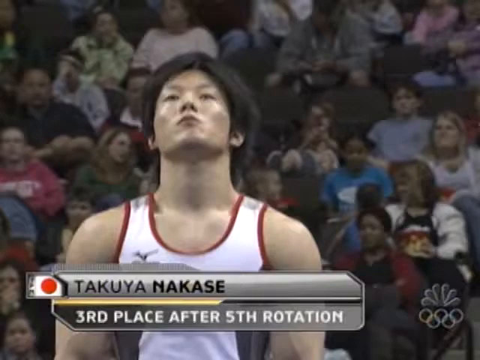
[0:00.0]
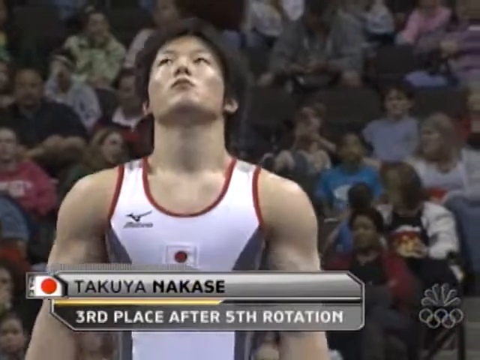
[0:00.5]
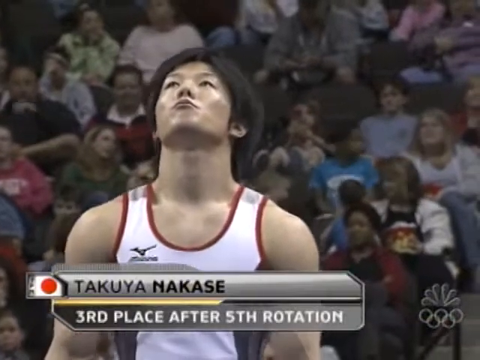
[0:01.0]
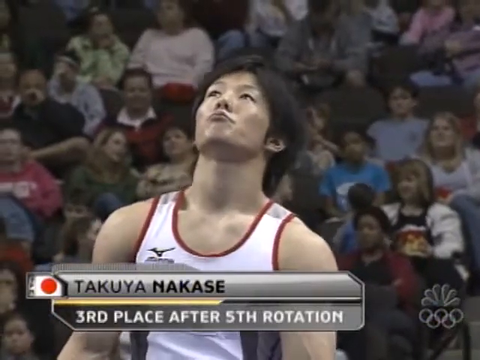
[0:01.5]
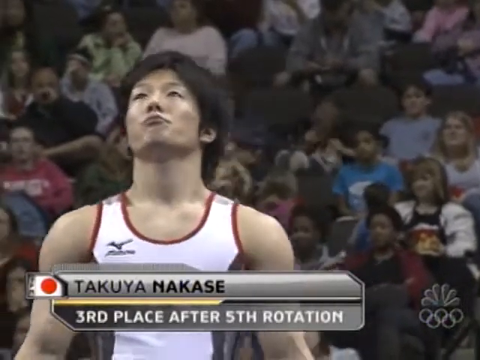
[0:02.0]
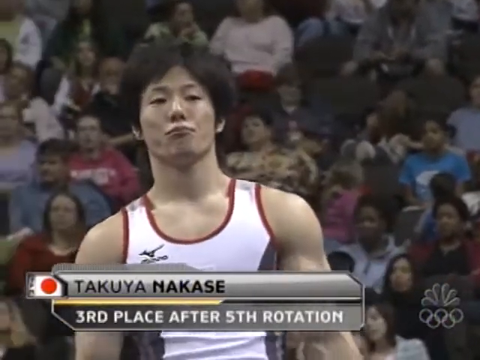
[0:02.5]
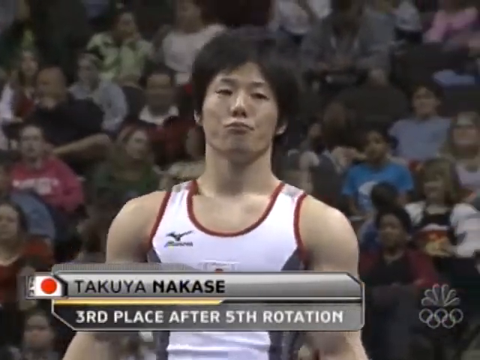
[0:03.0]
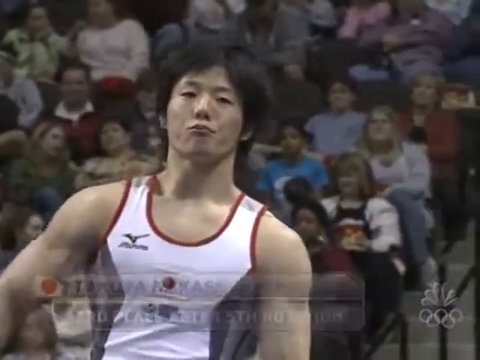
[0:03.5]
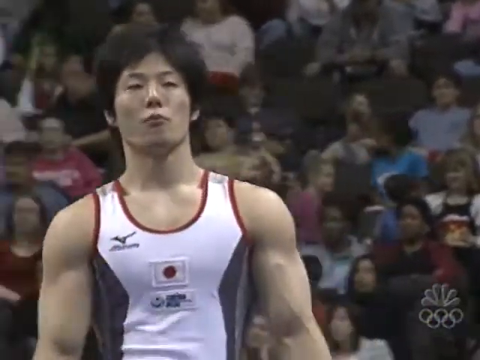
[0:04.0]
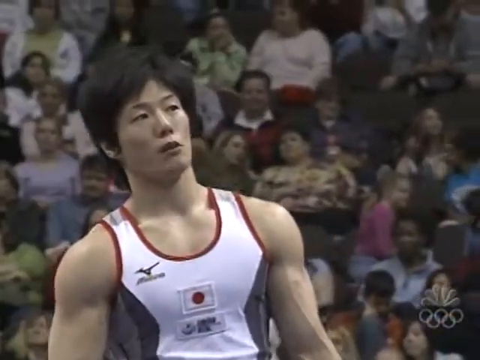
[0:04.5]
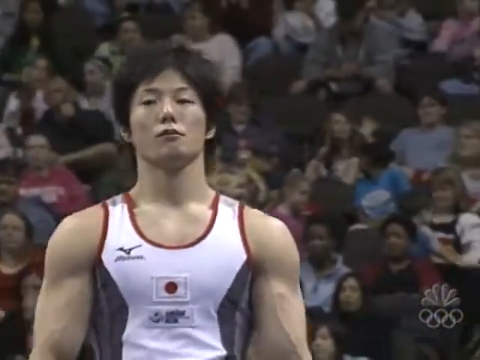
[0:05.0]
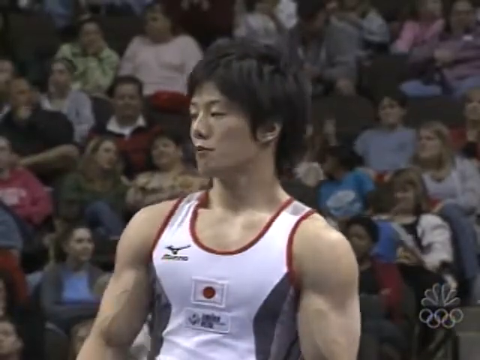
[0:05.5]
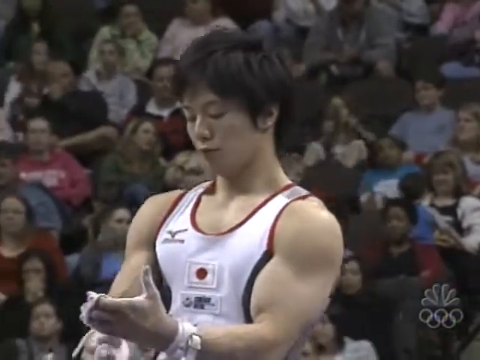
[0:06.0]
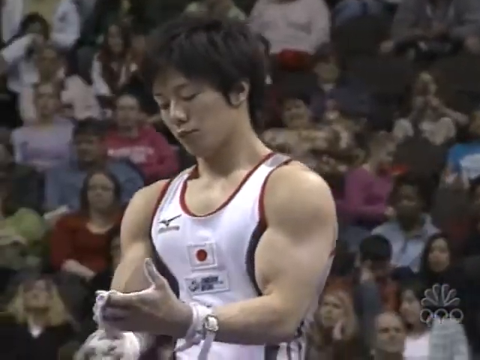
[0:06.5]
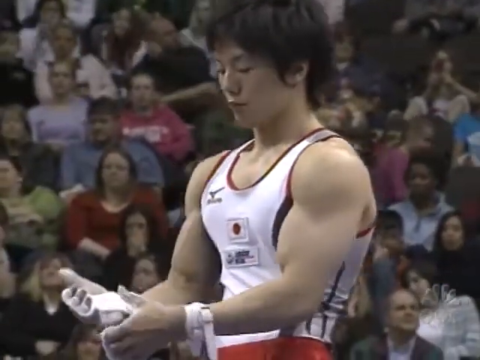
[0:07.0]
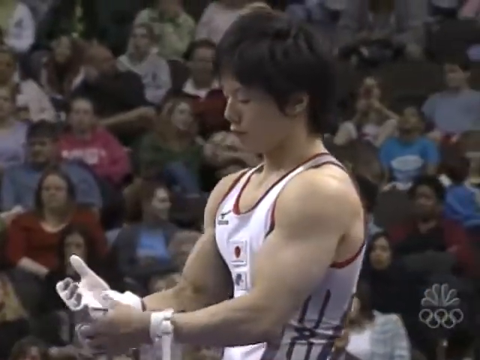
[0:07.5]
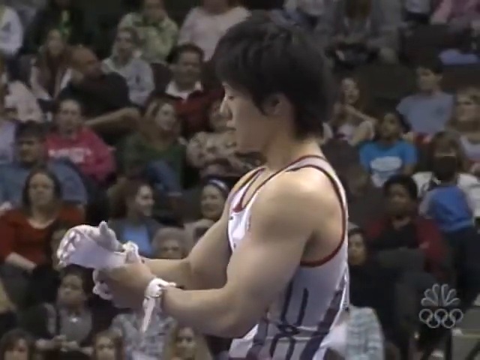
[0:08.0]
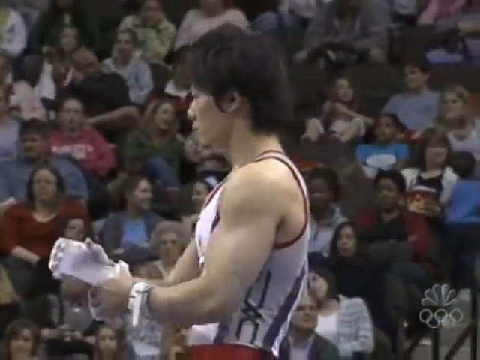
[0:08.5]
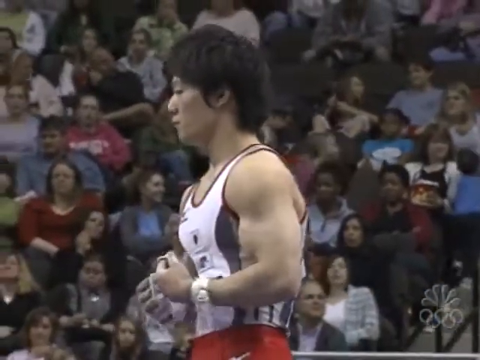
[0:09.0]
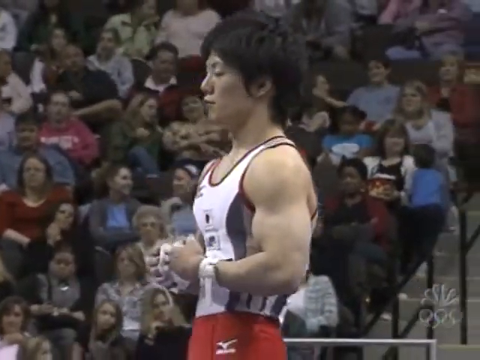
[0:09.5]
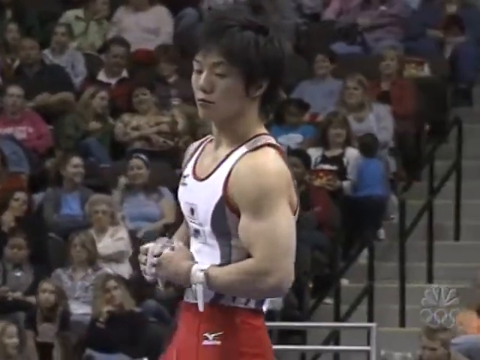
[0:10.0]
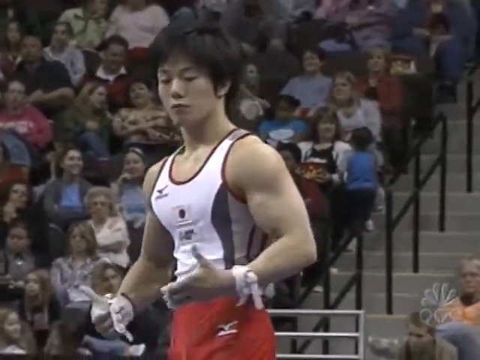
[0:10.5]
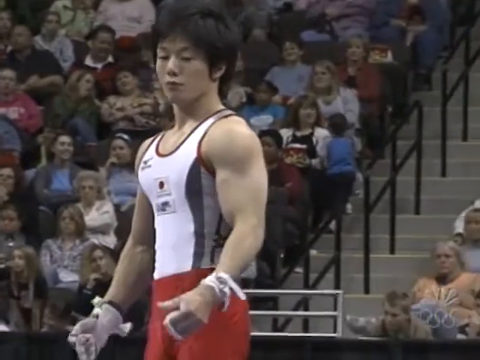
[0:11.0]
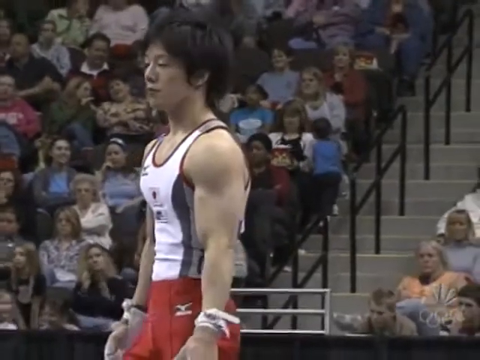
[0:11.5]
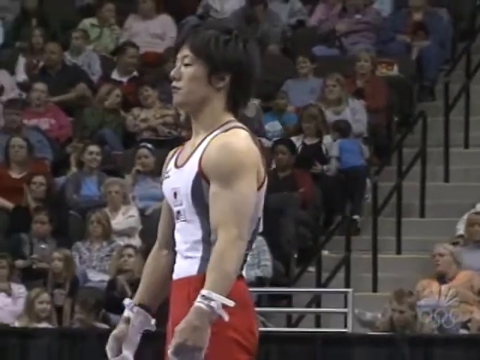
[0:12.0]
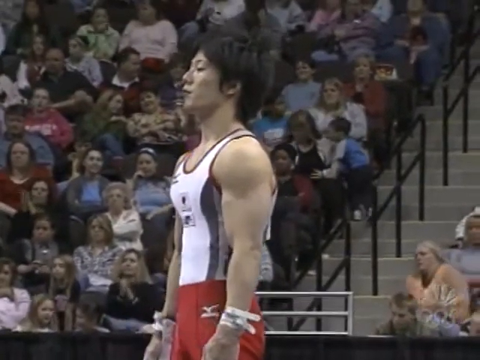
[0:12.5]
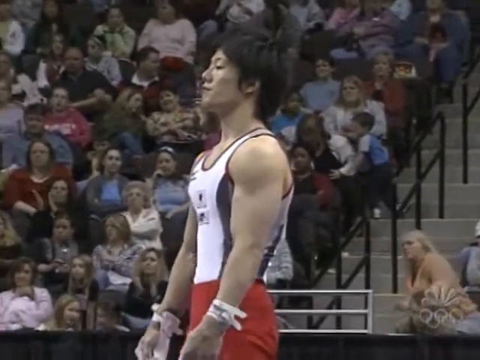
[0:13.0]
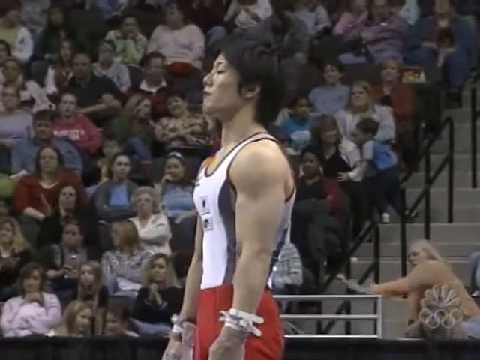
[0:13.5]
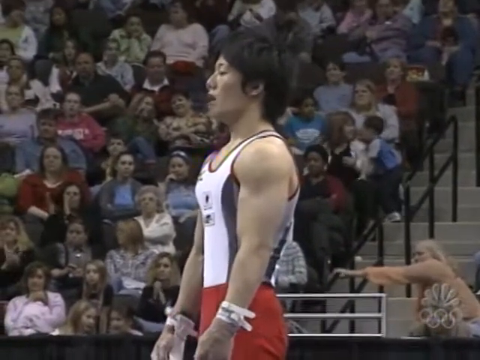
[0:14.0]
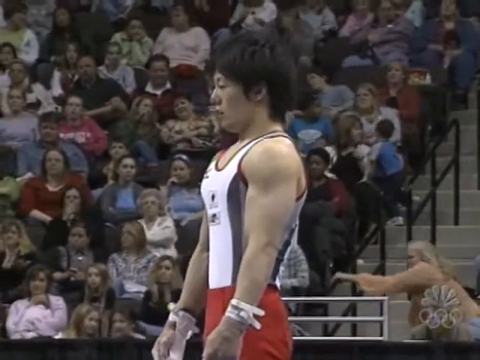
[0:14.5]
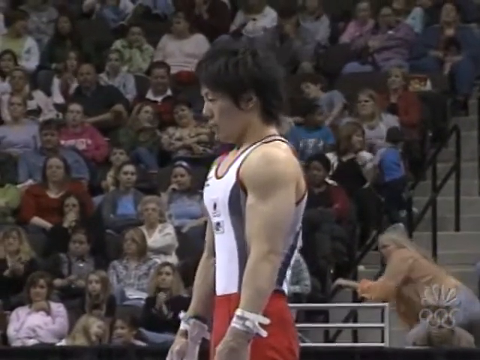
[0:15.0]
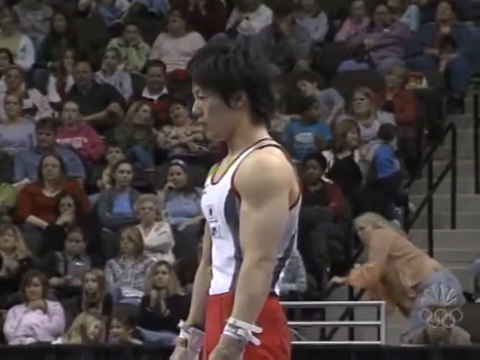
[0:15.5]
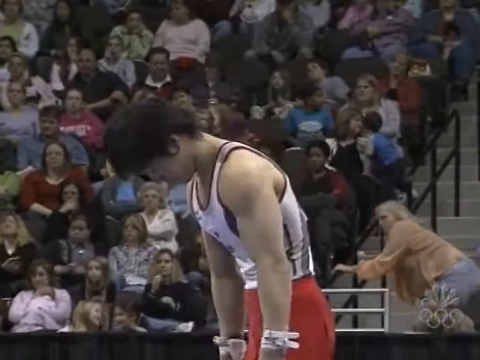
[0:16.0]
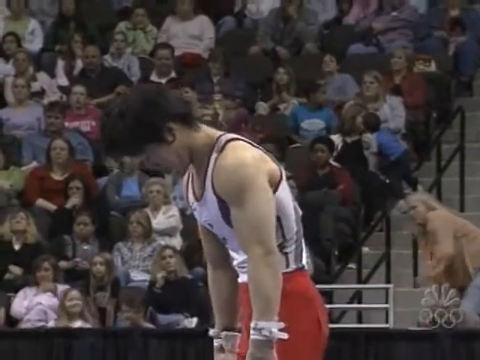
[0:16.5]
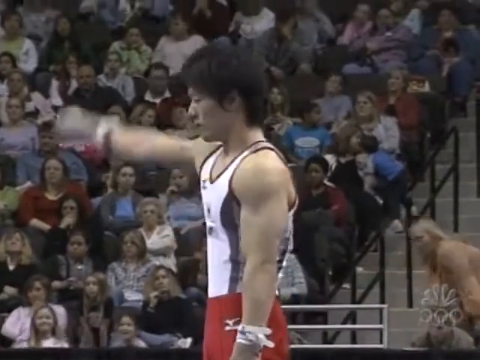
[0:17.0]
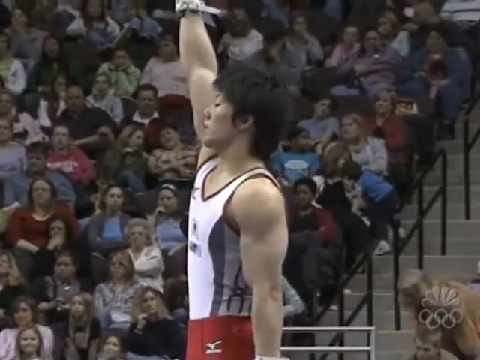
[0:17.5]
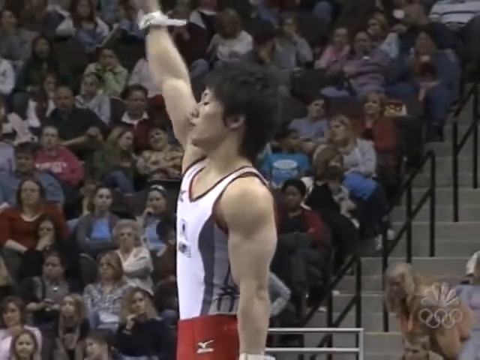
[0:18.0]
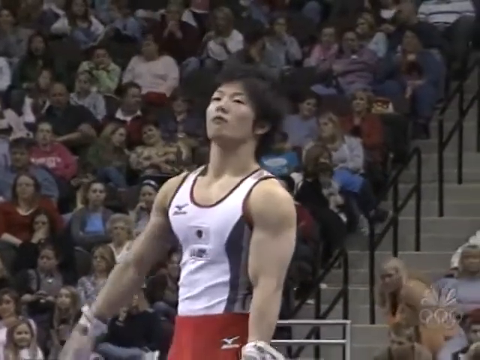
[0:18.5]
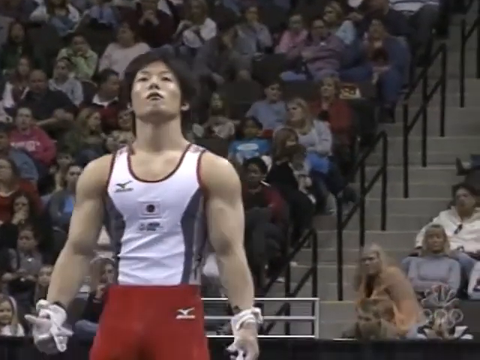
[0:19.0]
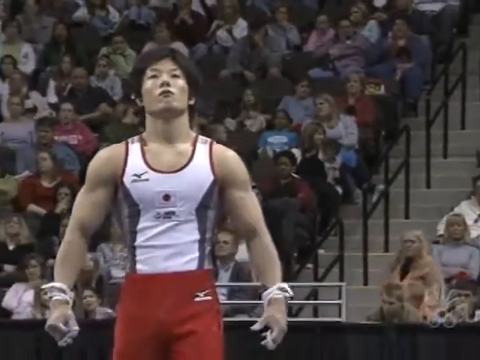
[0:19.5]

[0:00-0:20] The video seems to show a Japanese athlete. At the bottom left there is the Japanese flag followed by the name "Takuya Nakase", and text at the bottom says "3rd place after 5th rotation". On the bottom right there is what seems to be the NBC channel logo, with the Olympic logo at the bottom. The athlete seems to be jumping, kind of moving back and forth as he looks up to the sky. He has short brown hair and wears a tank-top-like jersey that is white with red trimming. He jumps once while looking up at the sky, then kind of swings from left to right and looks back down. His lips are a bit perked up, held close together. He swings his right arm a little as the subtitles disappear, showing quite sizable biceps. He seems to open his mouth as he swings to the left, then swings to the right and faces more towards his right. He lifts his left hand, which was previously out of frame, and looks at it; the hand seems to have some white powder on it.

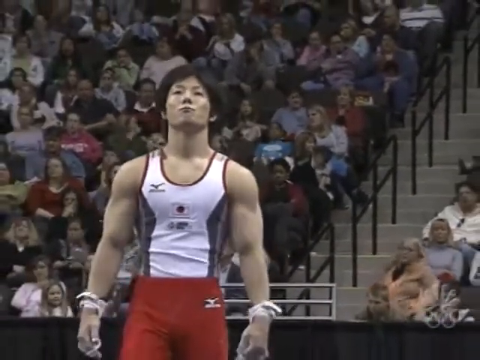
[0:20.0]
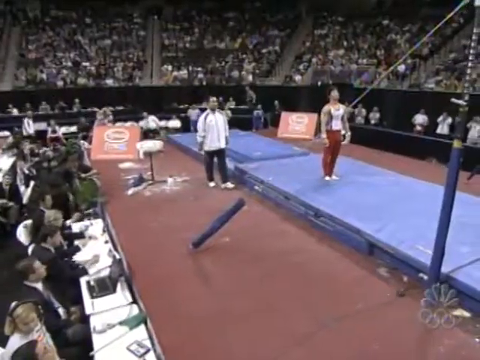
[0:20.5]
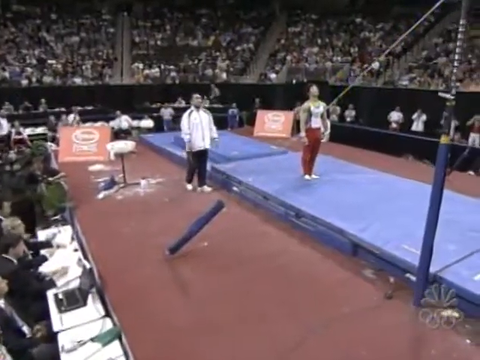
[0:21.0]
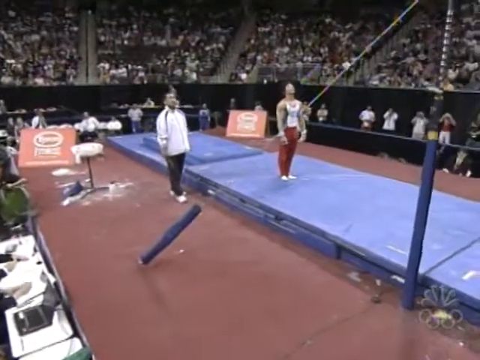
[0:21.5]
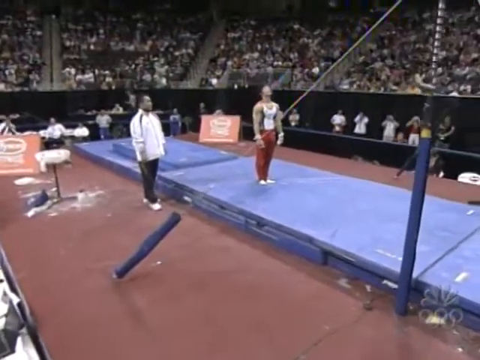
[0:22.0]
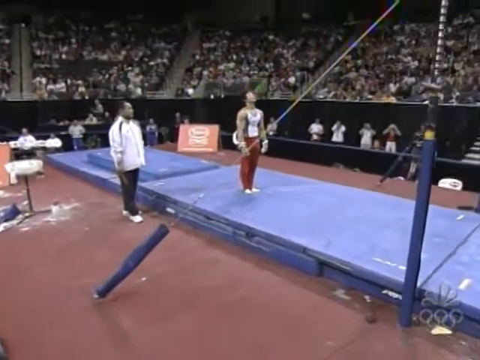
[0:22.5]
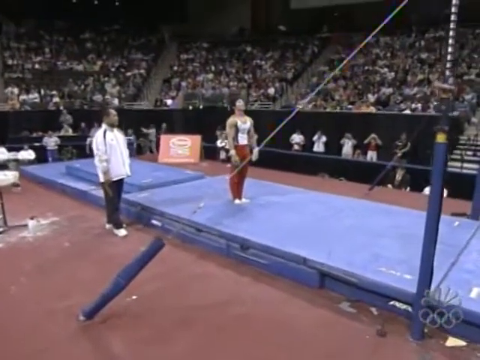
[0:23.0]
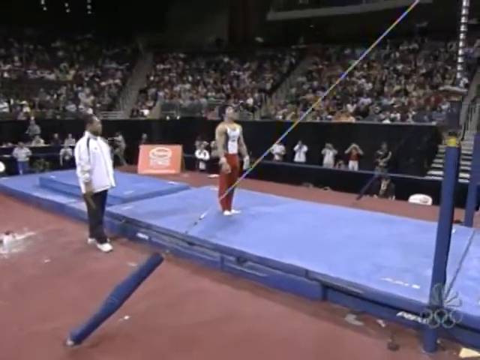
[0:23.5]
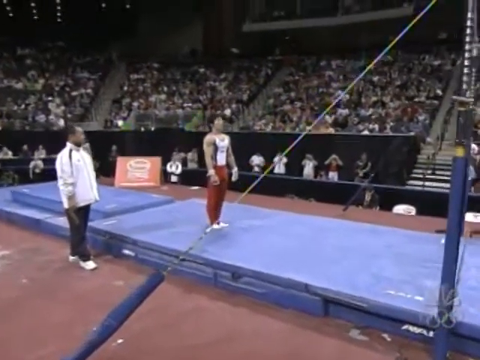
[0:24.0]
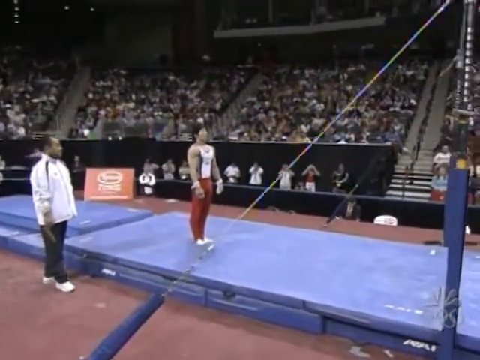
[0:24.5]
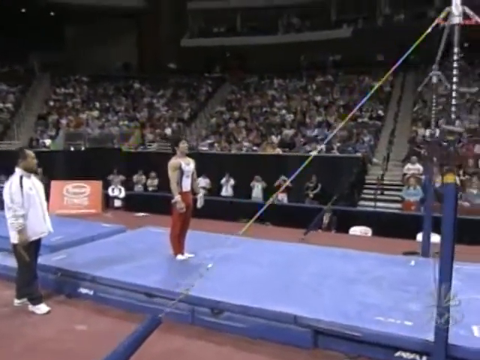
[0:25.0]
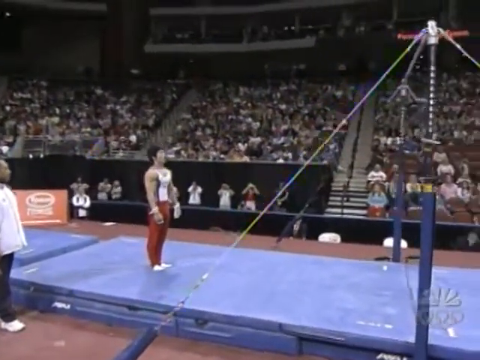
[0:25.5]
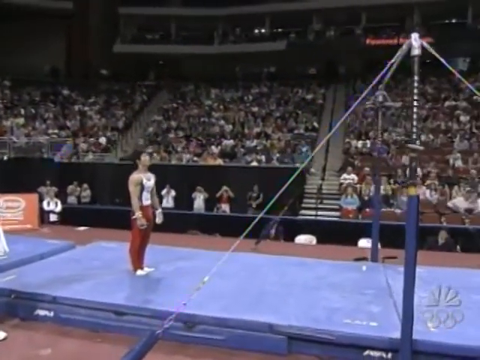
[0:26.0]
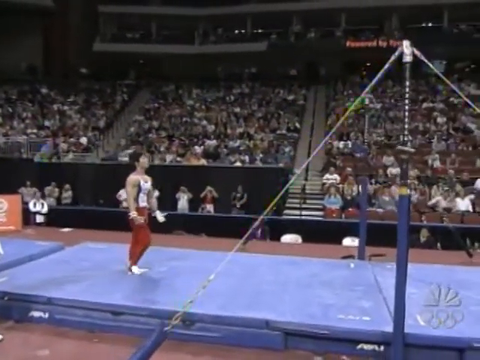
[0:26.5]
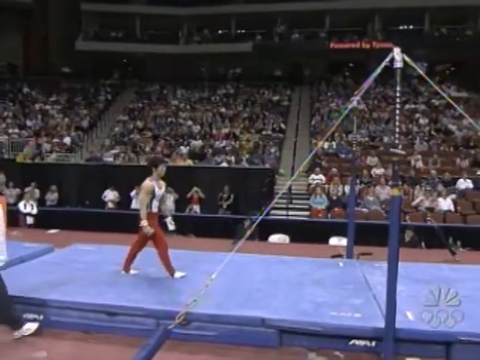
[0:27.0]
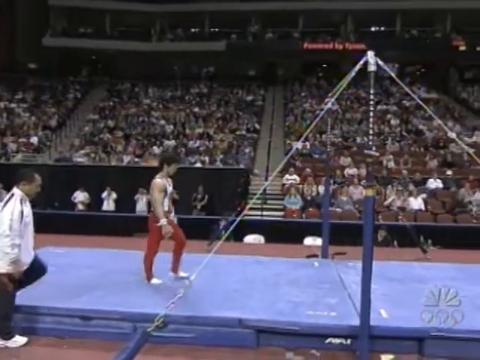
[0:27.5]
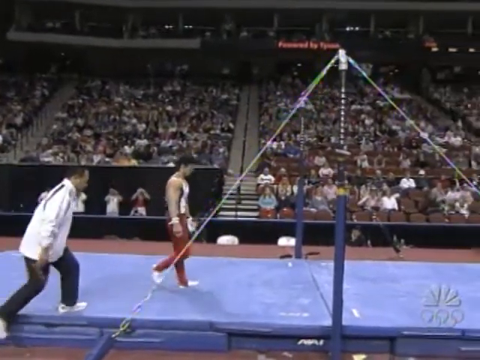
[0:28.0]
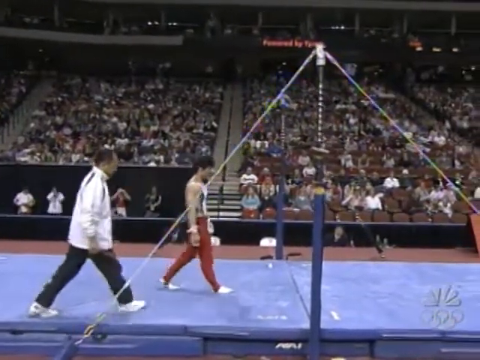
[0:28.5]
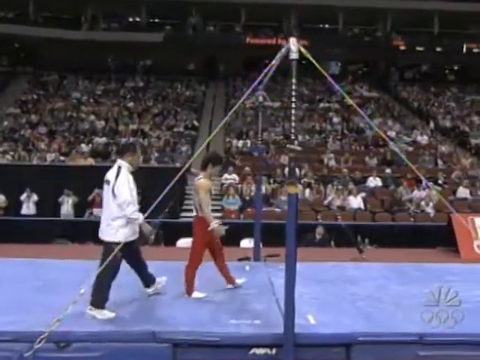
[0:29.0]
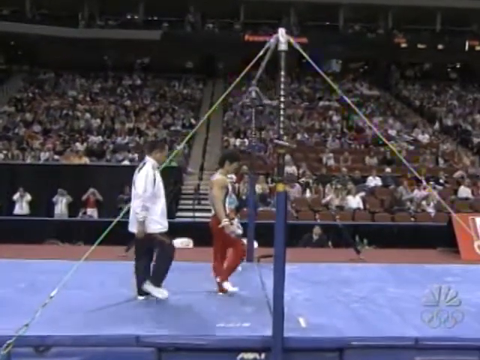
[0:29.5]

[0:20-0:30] The Japanese man at first stands still, looking at the sky, in a knee-up shot. The frame then cuts to a view from farther away, showing him standing on what looks to be long rectangles of blue flooring, like the kind athletes fall onto without getting hurt. To the athlete's right there seems to be a coach or trainer wearing a white jacket and black pants, with very short hair. The athlete looks a little up to his front as he keeps still. He then takes a step forward with his right leg and walks slowly to what looks to be a bar at the center, with two blue poles on the left and right and the bar hanging between them. The coach, who was previously outside the blue mat, goes onto it with the athlete and seems to go behind him.